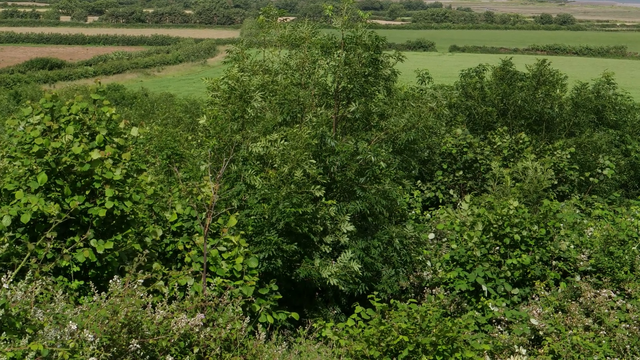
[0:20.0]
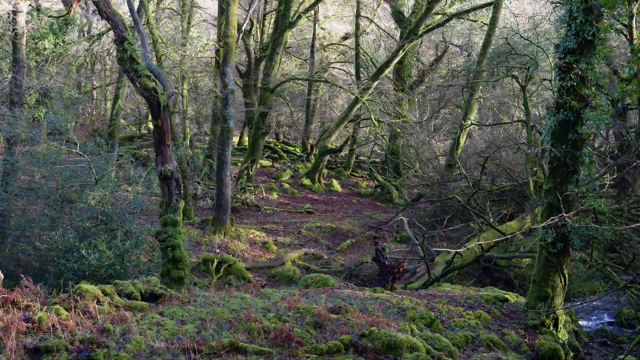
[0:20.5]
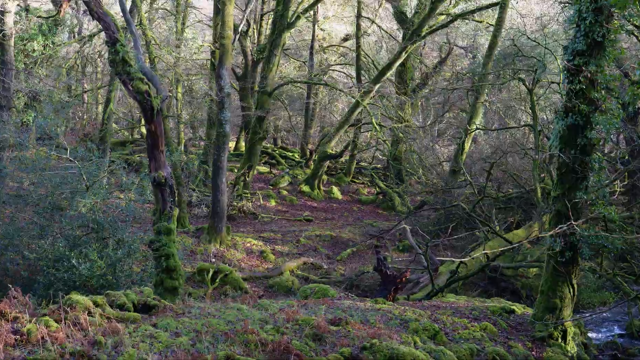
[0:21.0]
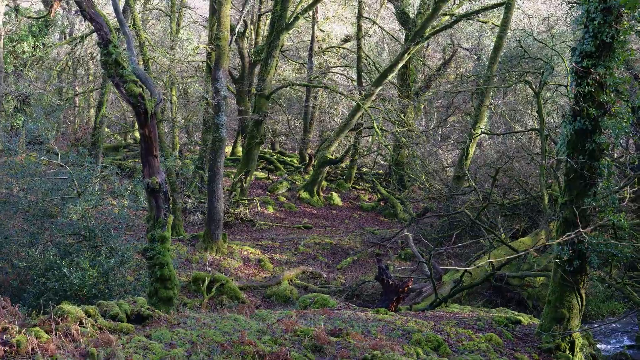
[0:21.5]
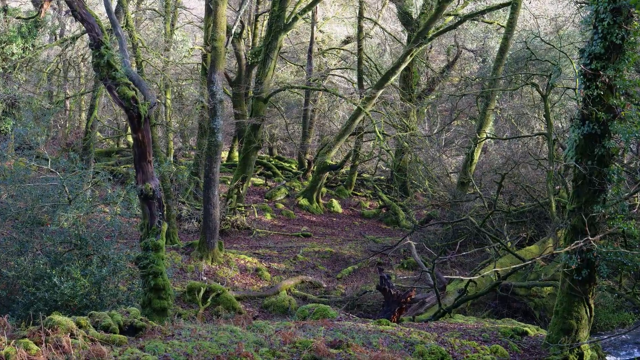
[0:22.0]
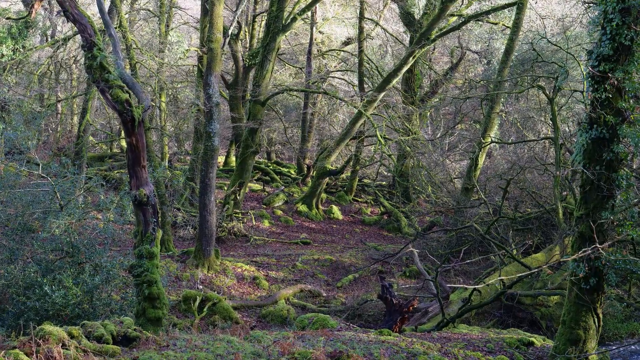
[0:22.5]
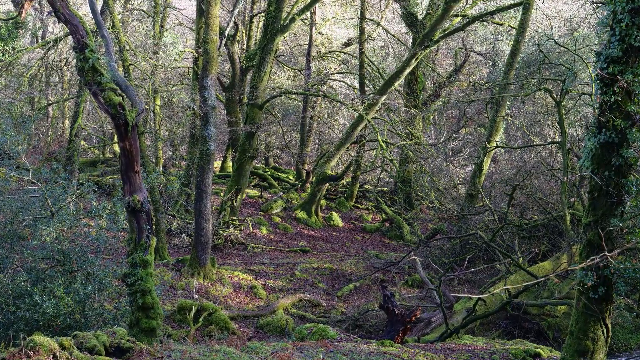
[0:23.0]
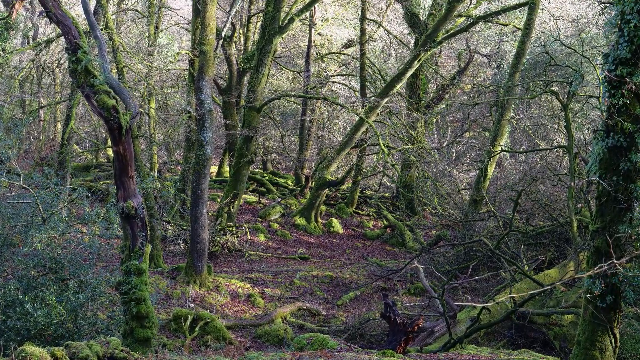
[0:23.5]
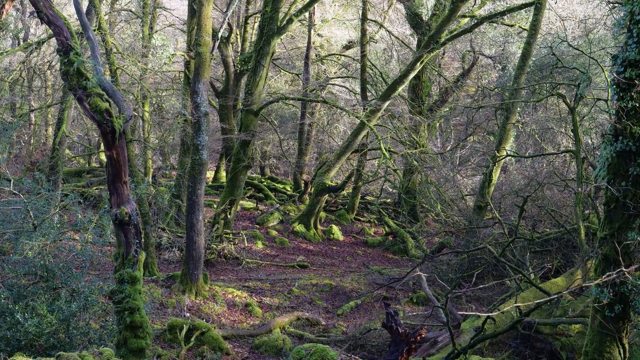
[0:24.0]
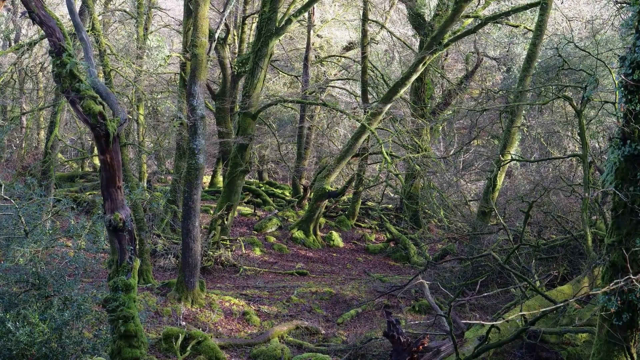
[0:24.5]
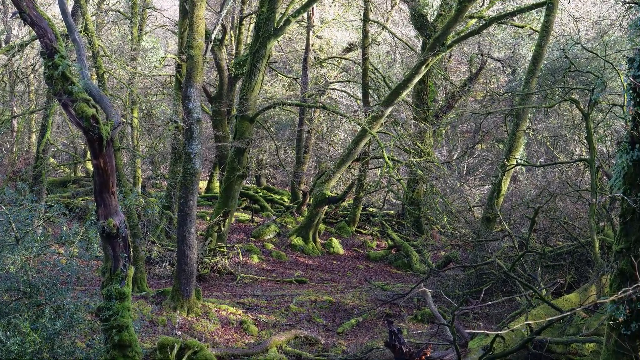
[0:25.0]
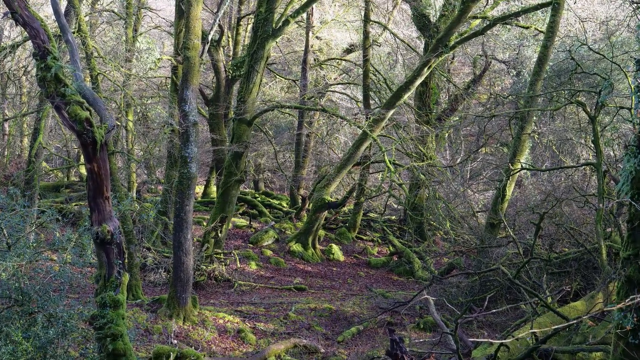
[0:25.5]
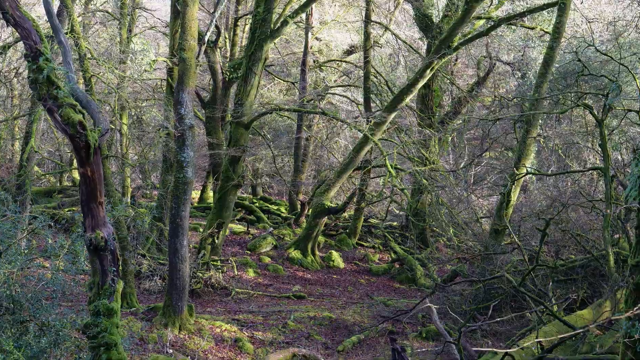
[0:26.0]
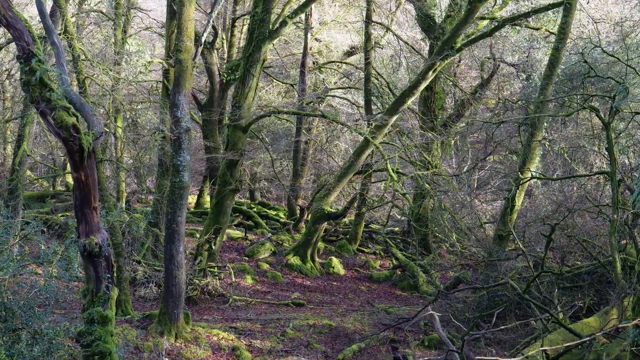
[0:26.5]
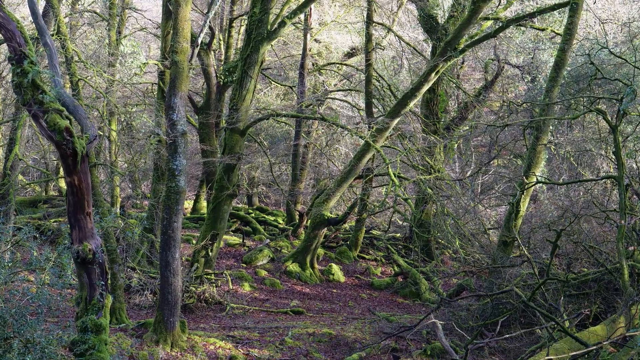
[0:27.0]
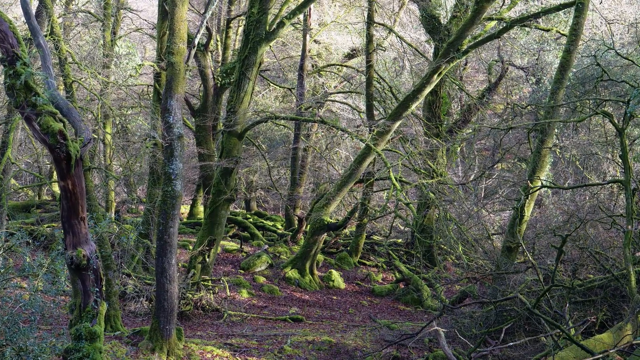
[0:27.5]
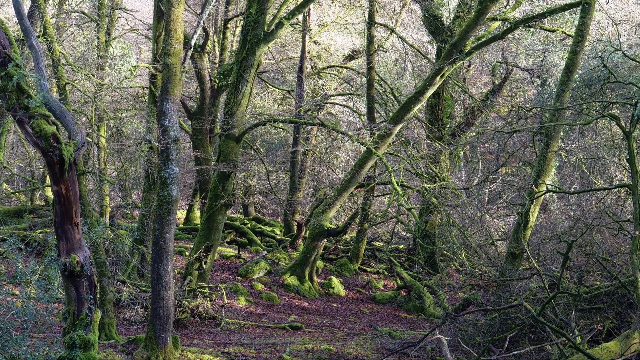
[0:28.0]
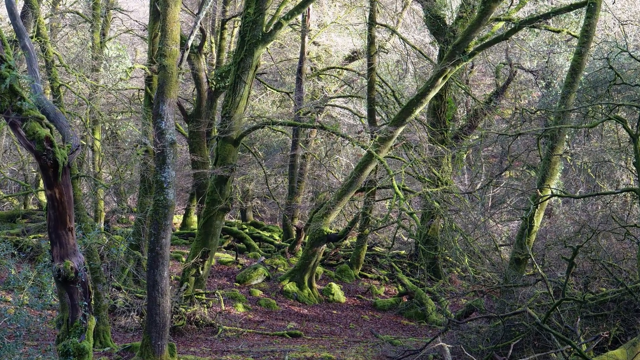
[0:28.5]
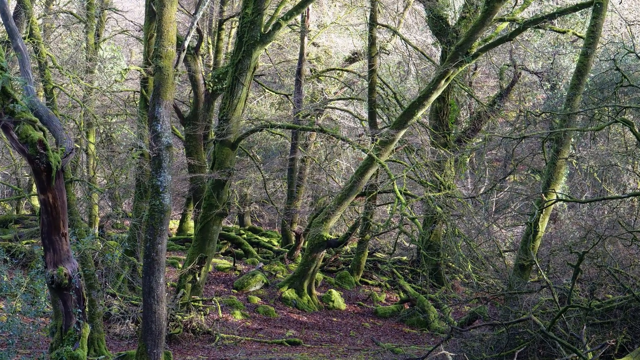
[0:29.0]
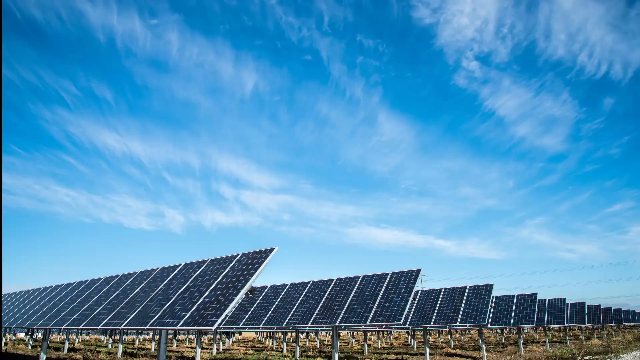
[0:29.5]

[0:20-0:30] A more zoomed-in view of the landscape shows trees in the lower half of the screen, with meadows and hedges in the upper section. A picture of some trees in the woods follows, and the camera starts to zoom in on the many branches; it zooms in again, going very close to the branches at the back of the trees. The screen then changes to a setting of blue skies and wispy clouds at the top, while at the bottom are panels in steps going from left to right, reducing in size. At the top of the screen, starting from the left corner, red writing says "first priority generate clean renewable electricity".